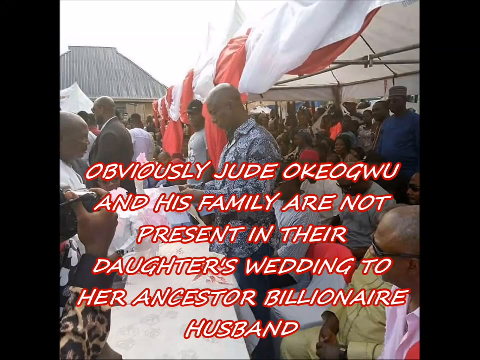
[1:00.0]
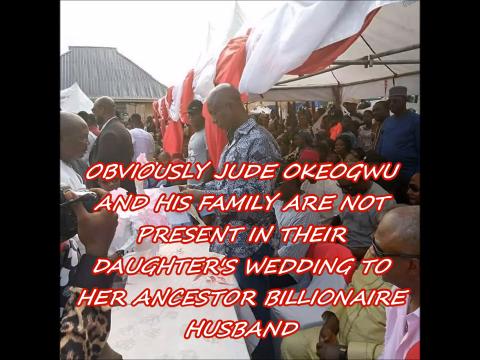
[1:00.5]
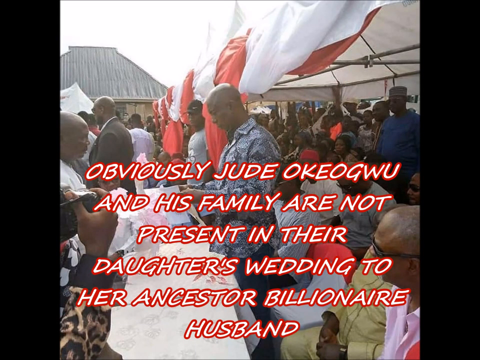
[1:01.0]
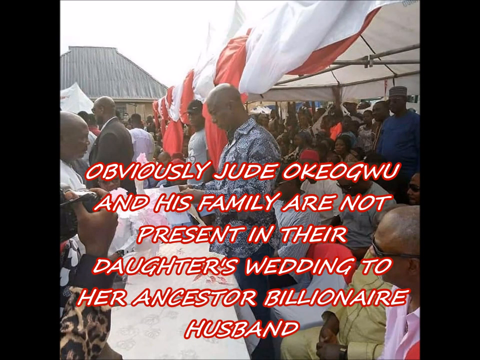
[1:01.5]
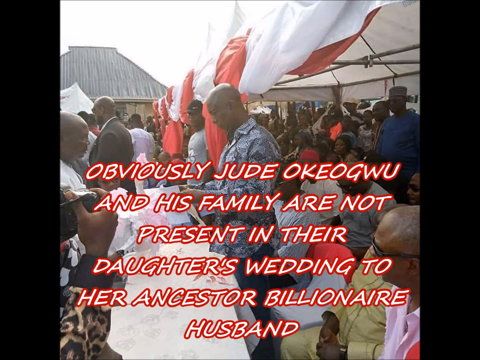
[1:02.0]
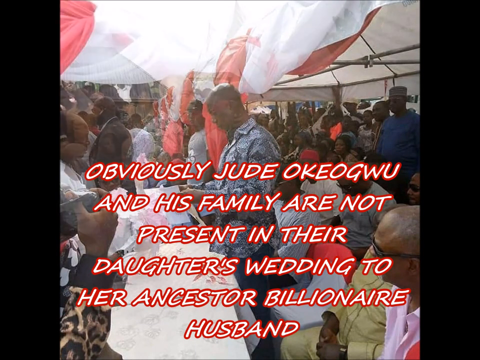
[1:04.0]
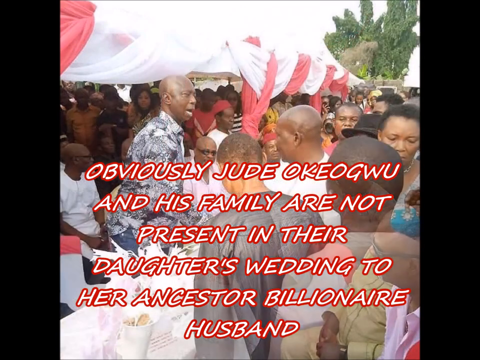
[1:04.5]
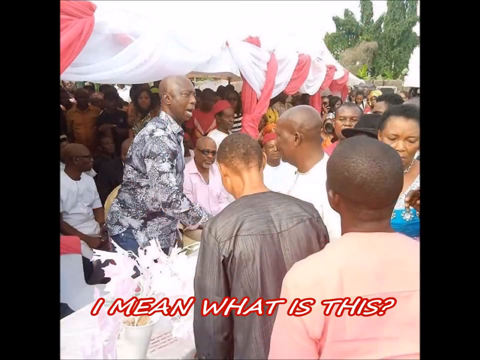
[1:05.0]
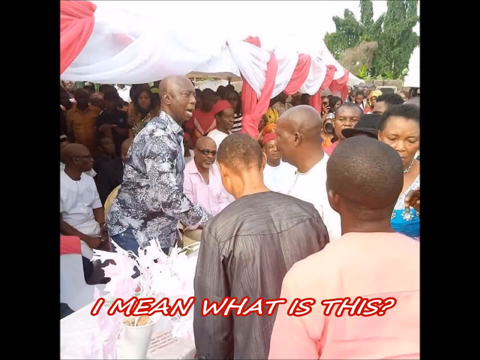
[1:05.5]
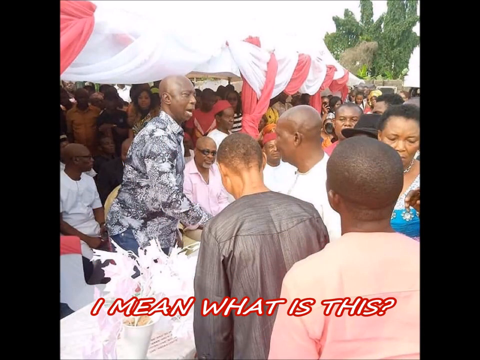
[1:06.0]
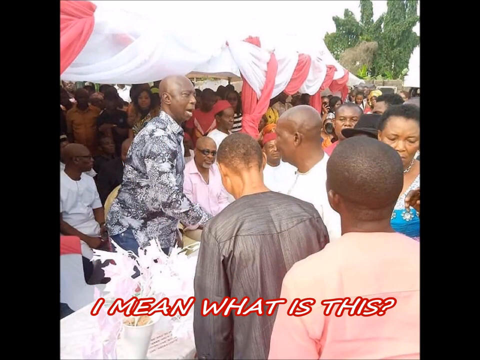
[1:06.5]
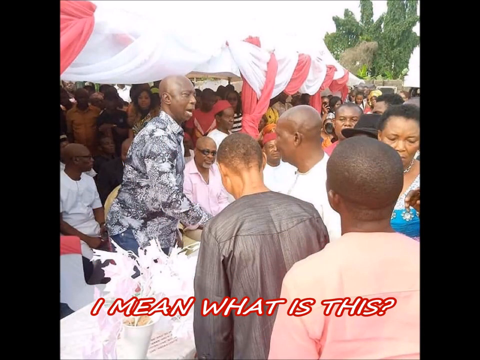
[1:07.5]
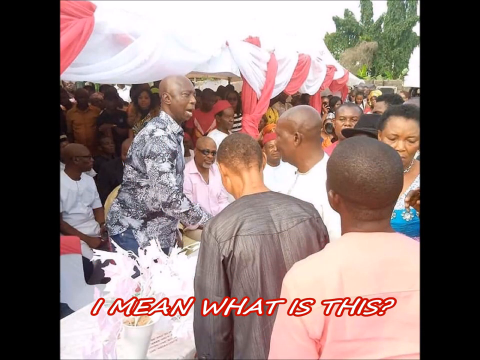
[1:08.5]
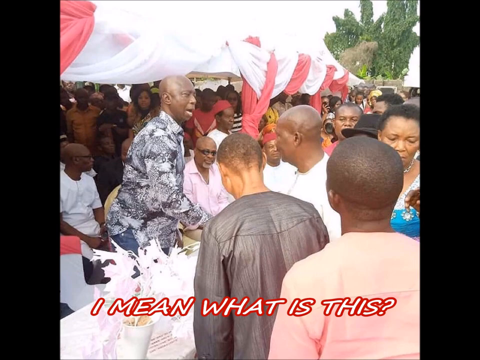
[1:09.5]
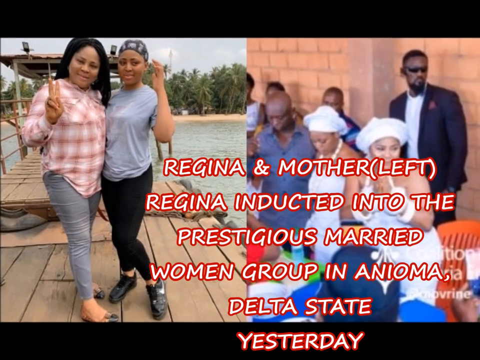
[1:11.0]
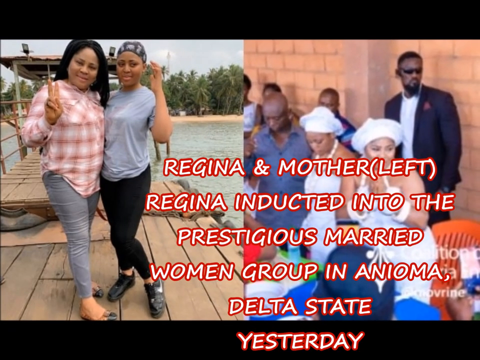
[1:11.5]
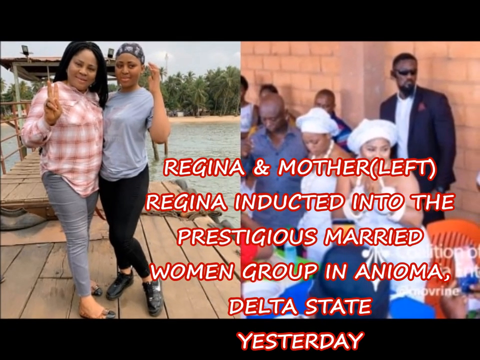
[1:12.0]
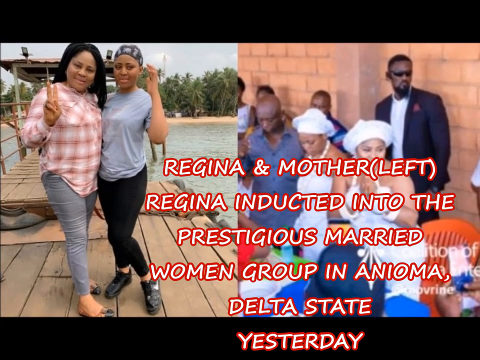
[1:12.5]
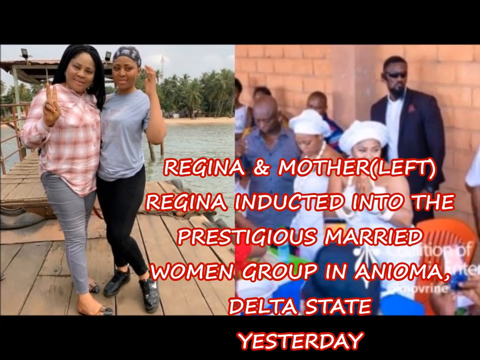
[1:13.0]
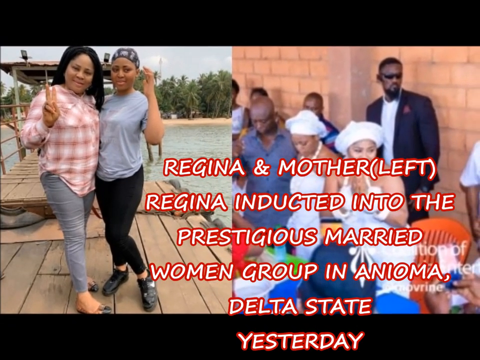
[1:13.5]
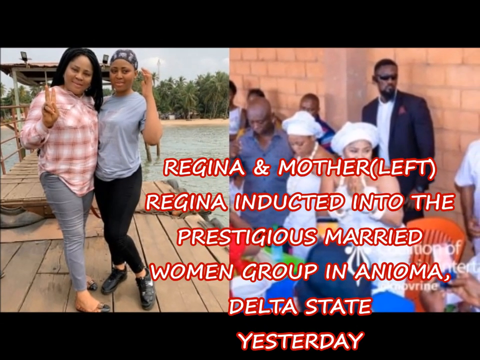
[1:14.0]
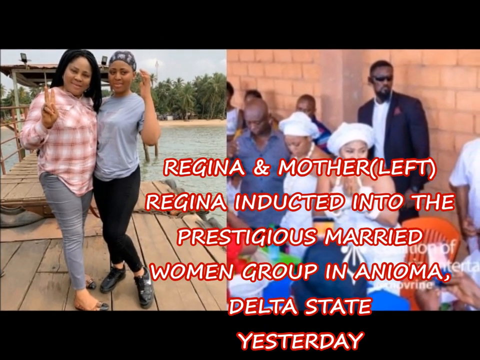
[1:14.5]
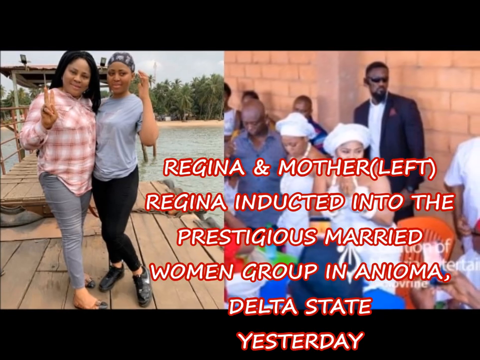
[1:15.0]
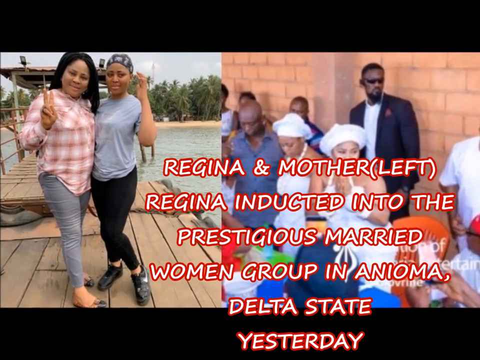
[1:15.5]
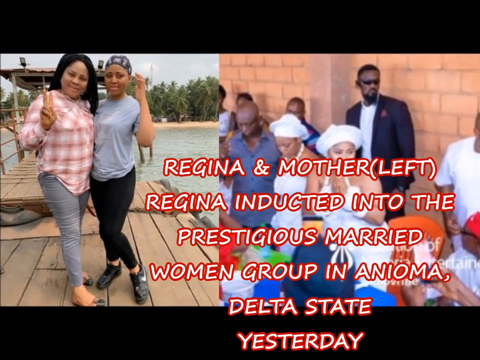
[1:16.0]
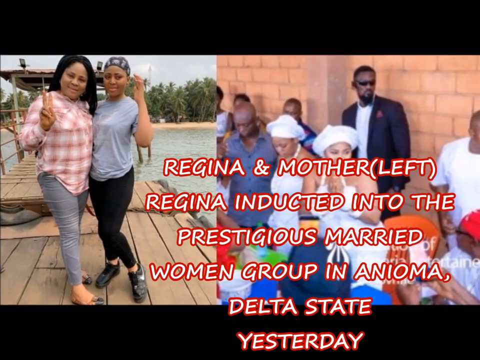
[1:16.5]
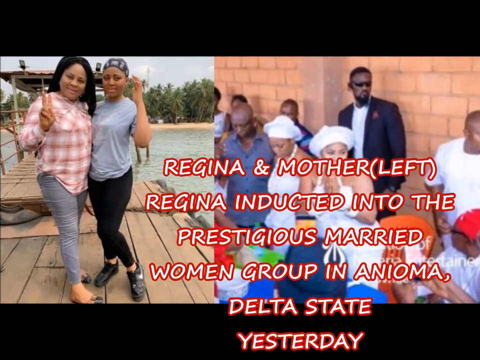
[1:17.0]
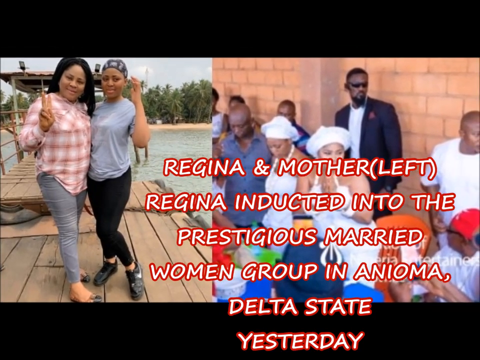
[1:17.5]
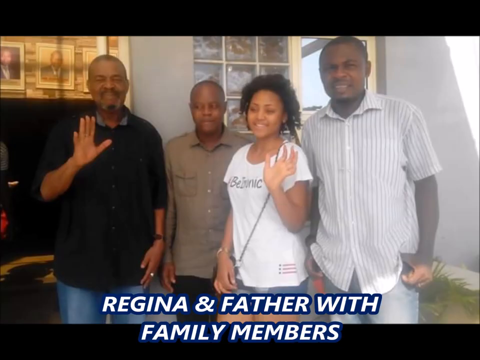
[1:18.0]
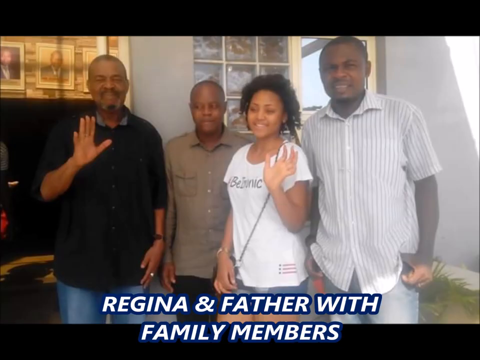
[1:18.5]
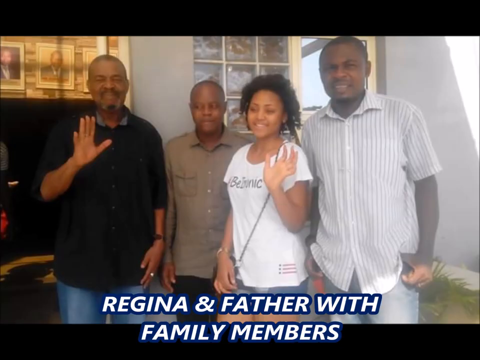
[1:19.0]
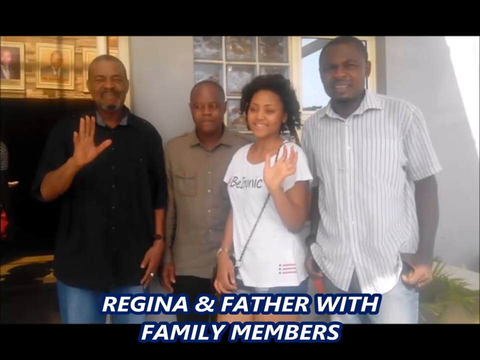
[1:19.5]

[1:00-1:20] Text on the picture reads "obviously Jude Okeogu and his family are not present in their daughter's wedding". Nedungoku stands wearing a designer top, with many people in attendance at the traditional wedding around him and a red and white canopy above his head; some security guards are present. Regina Daniels seems not to be present. Another picture shows Regina Daniels with her mom, with text reading "Regina and mother (left) Regina inducted into the prestigious married women group in Anioma Delta State yesterday". On the right of the screen, Nedungoku stands with a security guard behind him and two ladies dressed in traditional white attire. There is also a picture of Regina and her father with family members, though the family members seem not to have been present at the traditional wedding.